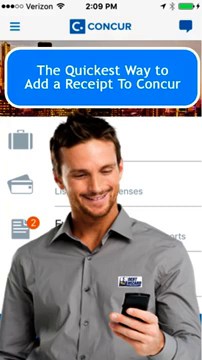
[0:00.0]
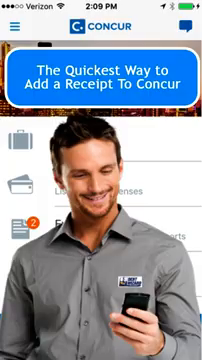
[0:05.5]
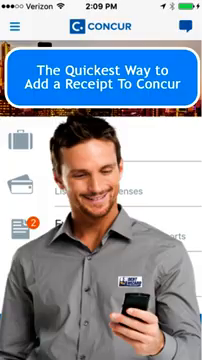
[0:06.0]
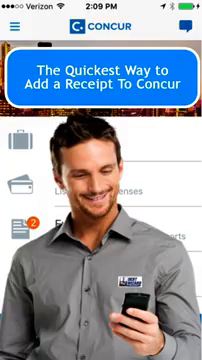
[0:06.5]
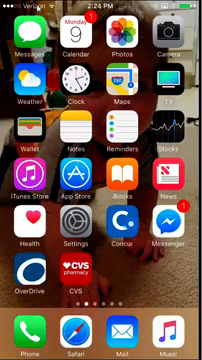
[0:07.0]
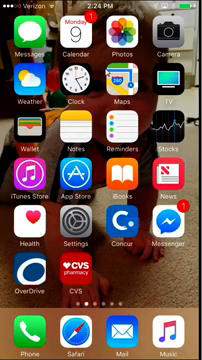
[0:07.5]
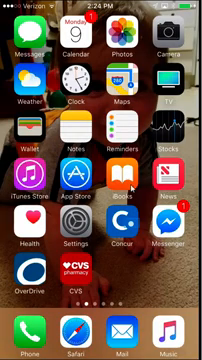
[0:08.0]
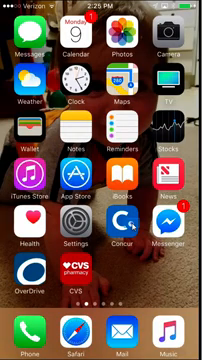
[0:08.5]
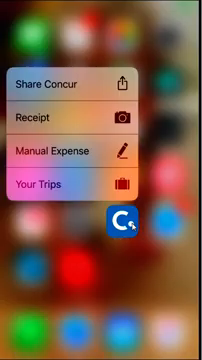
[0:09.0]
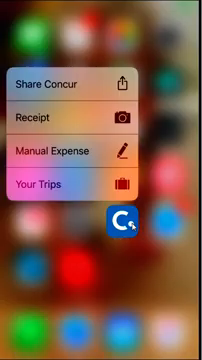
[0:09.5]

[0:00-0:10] A smartphone screen in portrait mode shows the interface of an app called Concur. At the top is a blue text box with white text inside that says "the quickest way to add a receipt to Concur". What appears to be a cutout image of a man looking at a smartphone has been placed on the screen, overlaying the actual app interface. The video then transitions to the home screen of a mobile phone, with the application shortcuts visible. The phone has a personalized background, a photograph of a small child crawling on the floor. A computer cursor is used to navigate the screen, like a phone emulator. The cursor moves down to the fifth row of applications and selects the third one along, a shortcut for the Concur application. Clicking it brings up a menu.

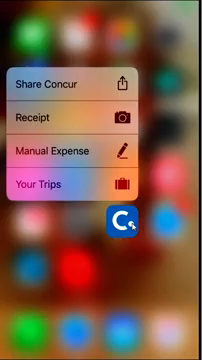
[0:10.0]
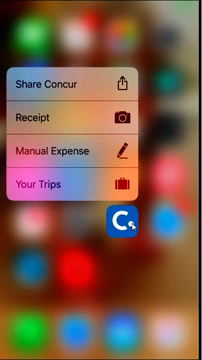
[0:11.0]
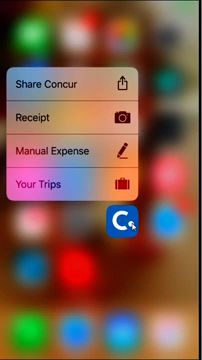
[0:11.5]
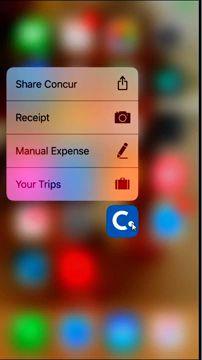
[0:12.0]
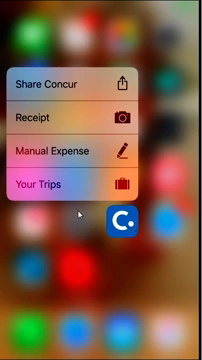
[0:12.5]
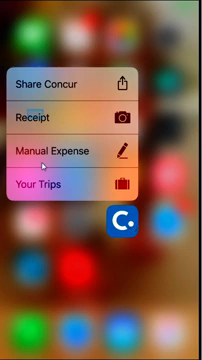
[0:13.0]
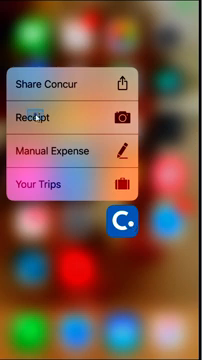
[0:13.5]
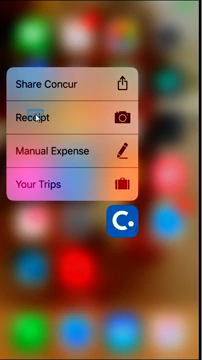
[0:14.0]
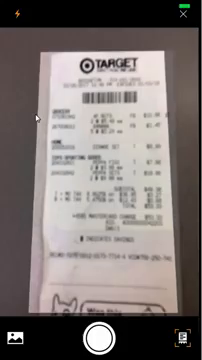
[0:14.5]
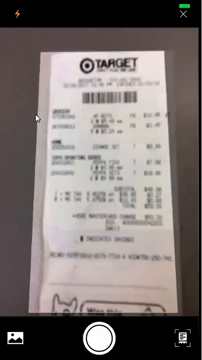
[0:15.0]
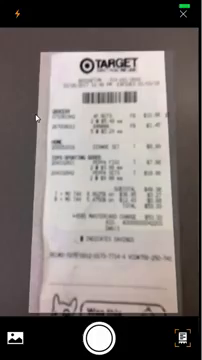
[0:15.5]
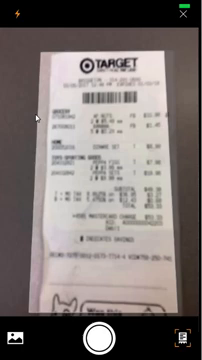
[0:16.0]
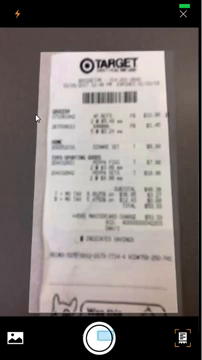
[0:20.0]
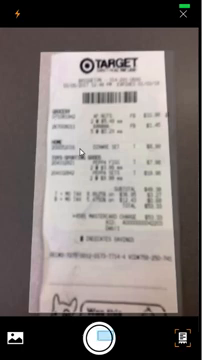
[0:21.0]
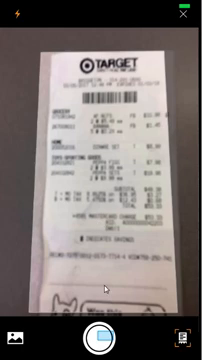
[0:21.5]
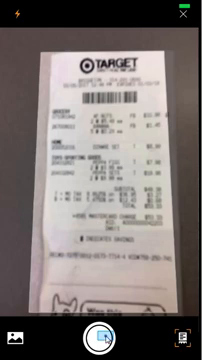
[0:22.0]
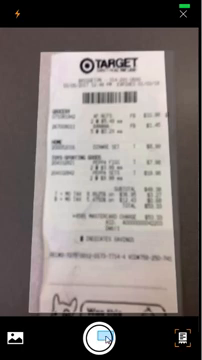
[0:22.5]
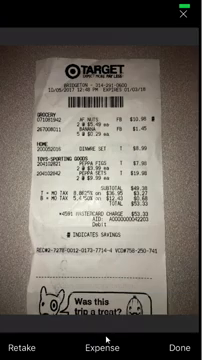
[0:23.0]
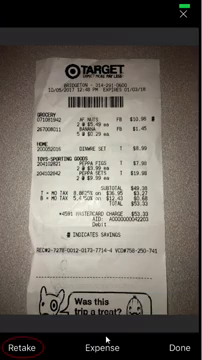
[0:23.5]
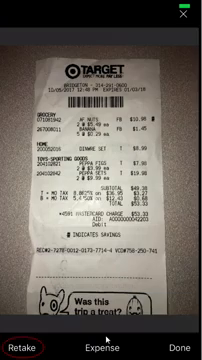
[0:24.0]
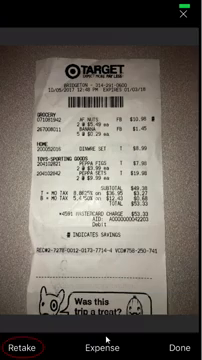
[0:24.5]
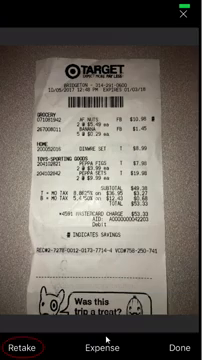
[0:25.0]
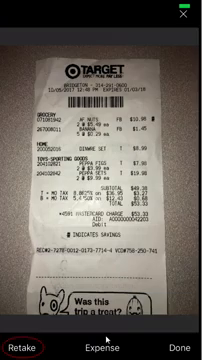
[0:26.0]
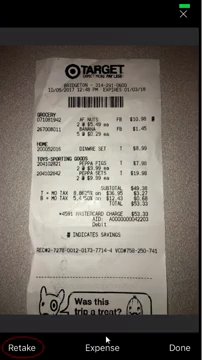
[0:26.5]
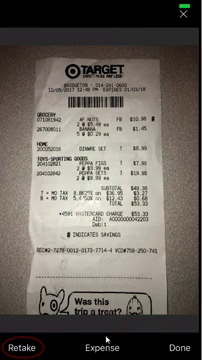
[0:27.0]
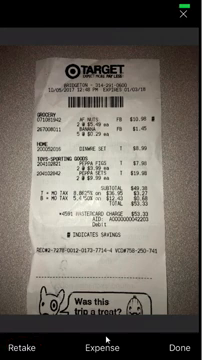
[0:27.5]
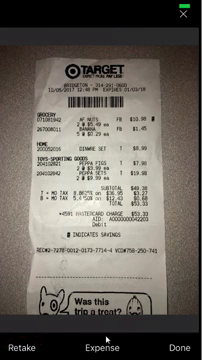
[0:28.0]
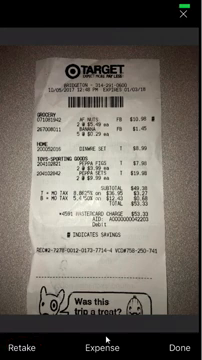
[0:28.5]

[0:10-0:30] A screen recording of a smartphone screen, apparently made with some kind of phone emulator, since the device is operated with a computer cursor rather than the touchscreen. An application shortcut has been selected; it is now the only thing on the screen, with the background and other application shortcuts blurred. A pop-up menu above the shortcut has four options: "share Concur", "receipt", "manual expense" and "your trips". The cursor moves to select the receipt option, which brings up a phone camera app interface showing a receipt for Target, with control buttons at the bottom of the screen for taking a picture. The cursor moves down and selects the button in the bottom centre of the screen, which appears to take a photo of the Target receipt.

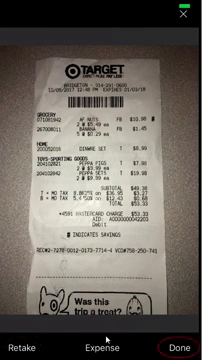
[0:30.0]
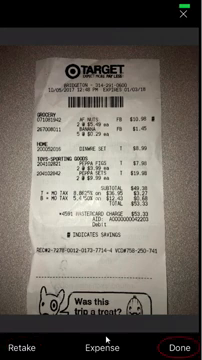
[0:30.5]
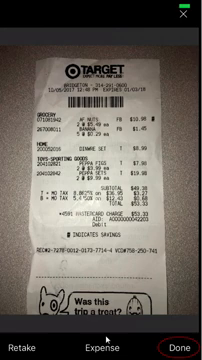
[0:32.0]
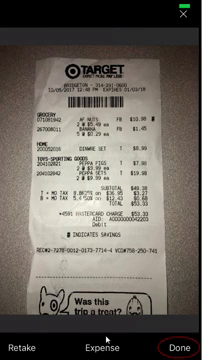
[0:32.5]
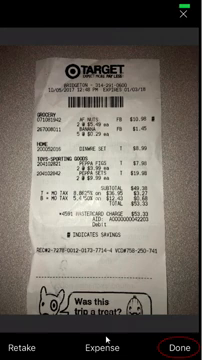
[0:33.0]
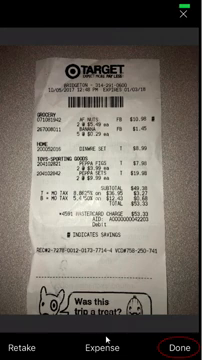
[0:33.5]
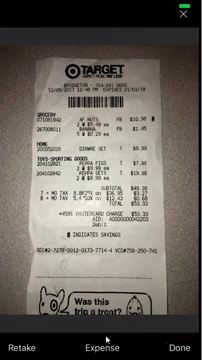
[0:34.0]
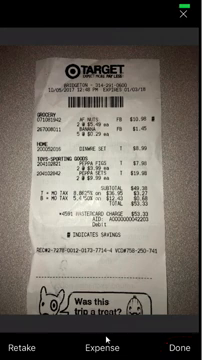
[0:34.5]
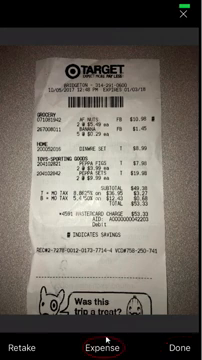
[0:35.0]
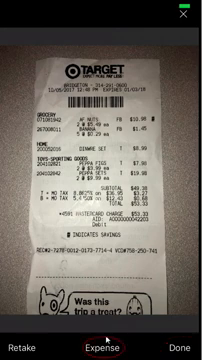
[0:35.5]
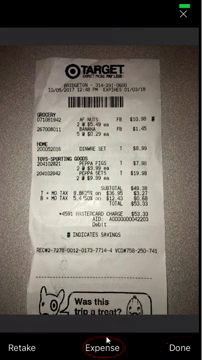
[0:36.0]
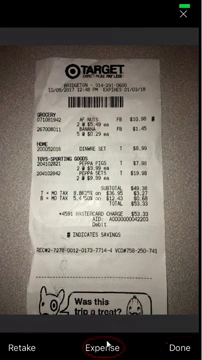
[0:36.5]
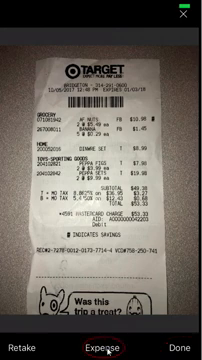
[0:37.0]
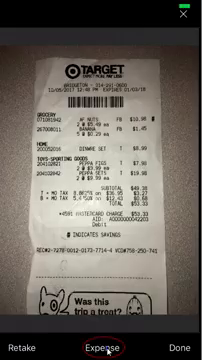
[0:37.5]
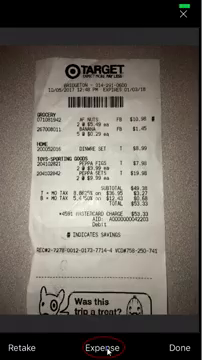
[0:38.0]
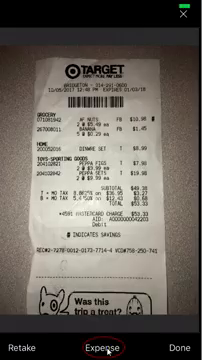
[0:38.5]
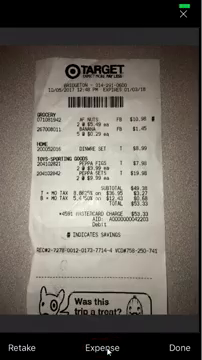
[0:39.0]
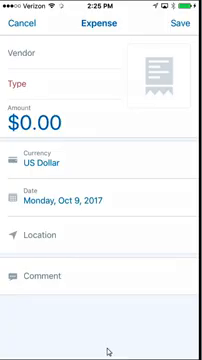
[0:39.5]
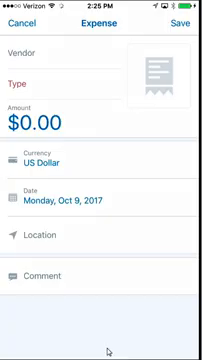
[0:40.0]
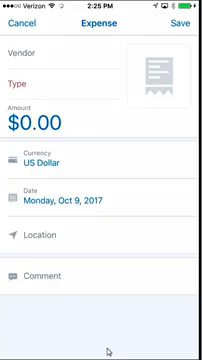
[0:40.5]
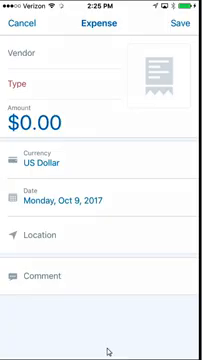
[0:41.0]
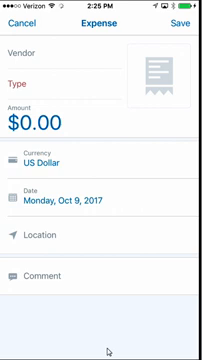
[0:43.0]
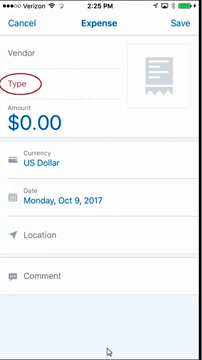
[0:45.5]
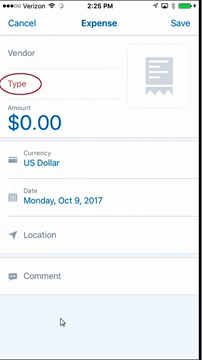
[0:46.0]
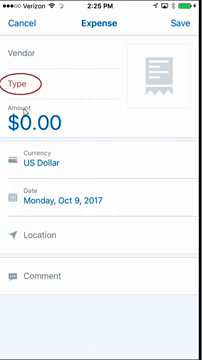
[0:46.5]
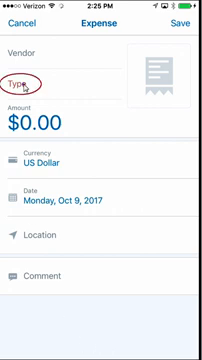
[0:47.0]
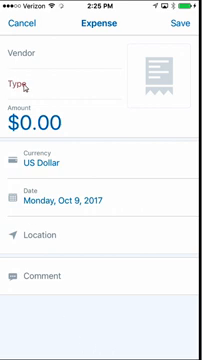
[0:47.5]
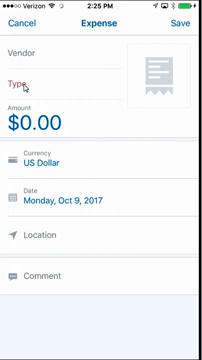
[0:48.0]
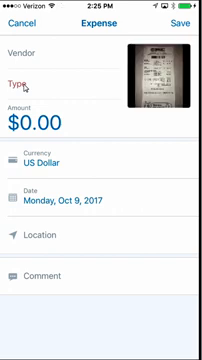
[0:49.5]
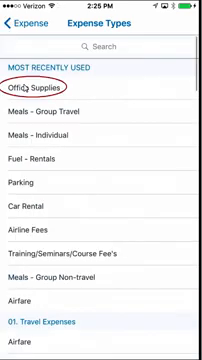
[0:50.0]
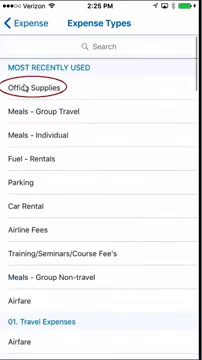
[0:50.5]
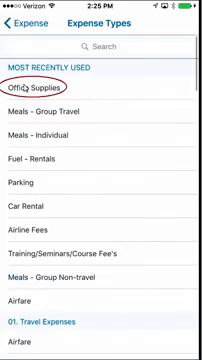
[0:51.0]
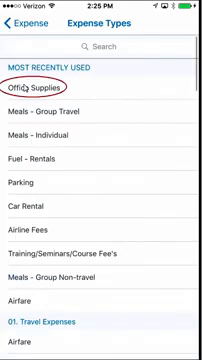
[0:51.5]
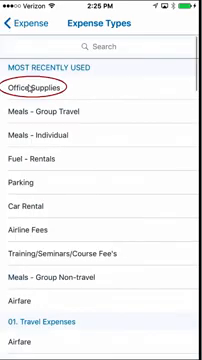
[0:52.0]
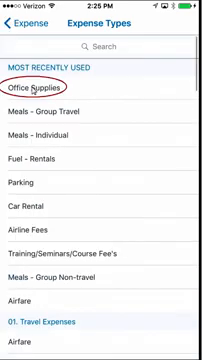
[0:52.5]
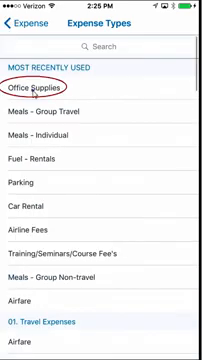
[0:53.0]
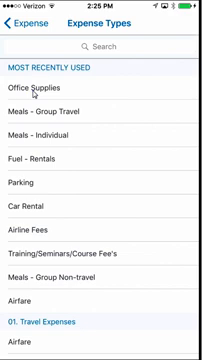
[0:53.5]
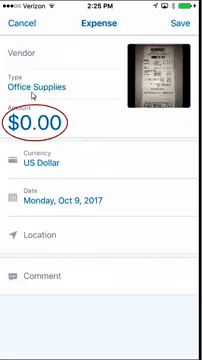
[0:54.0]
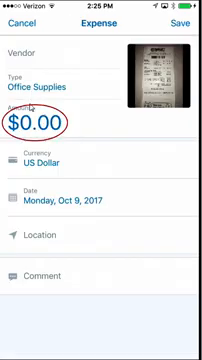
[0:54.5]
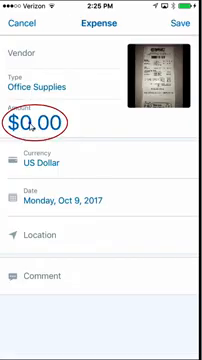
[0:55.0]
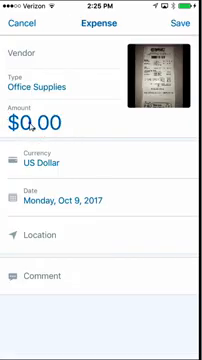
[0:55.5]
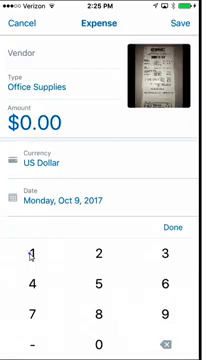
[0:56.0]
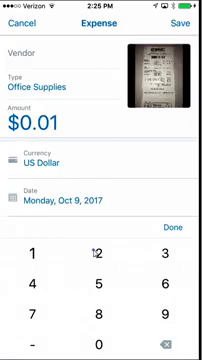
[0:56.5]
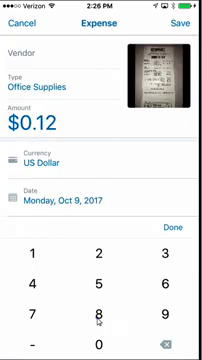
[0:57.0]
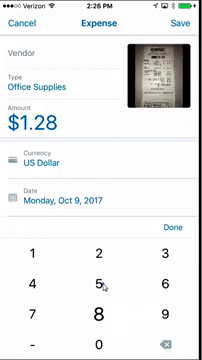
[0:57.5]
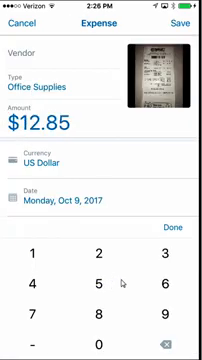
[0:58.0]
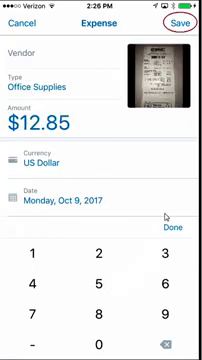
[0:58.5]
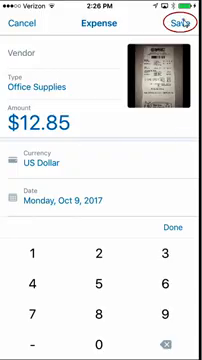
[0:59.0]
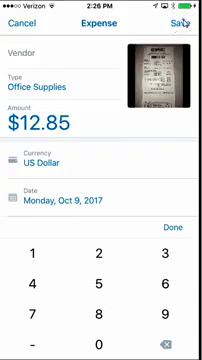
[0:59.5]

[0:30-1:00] A screen recording of a mobile phone interface in portrait mode, operated through some kind of phone emulator with a cursor. The screen shows a camera-style app interface with a photograph of a receipt taken on a table. At the bottom of the receipt are control menu buttons: "Retake", "Expense" and "Done". The centre option, Expense, is highlighted with a red outline, and the user appears to select it. A different screen comes up where the user can input information. The option for "type" has a red outline drawn around it, and the cursor moves and selects it. The screen loads a list of expense types; the top option, "office supplies", is highlighted by a red outline, and the user selects it with the cursor. The screen then returns to the main expenses form.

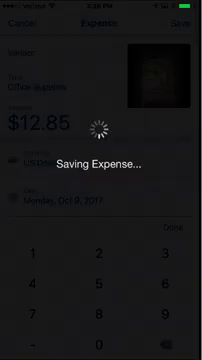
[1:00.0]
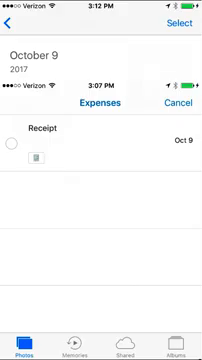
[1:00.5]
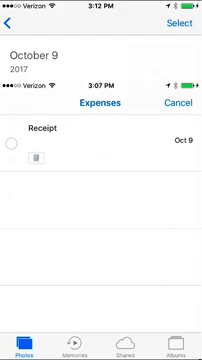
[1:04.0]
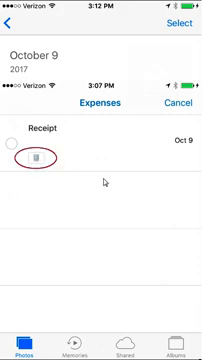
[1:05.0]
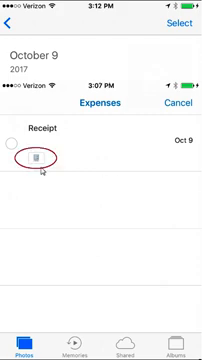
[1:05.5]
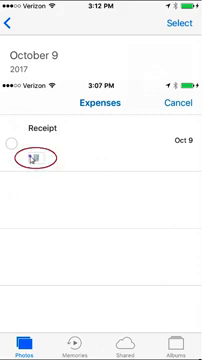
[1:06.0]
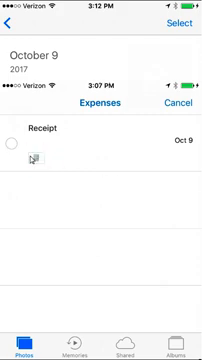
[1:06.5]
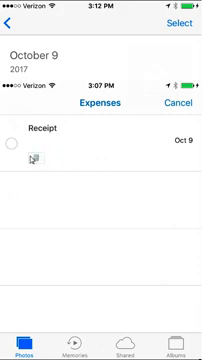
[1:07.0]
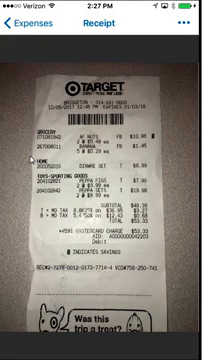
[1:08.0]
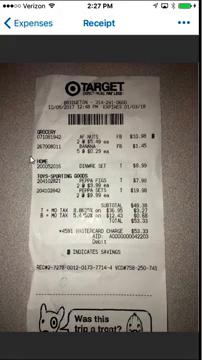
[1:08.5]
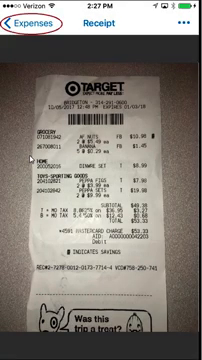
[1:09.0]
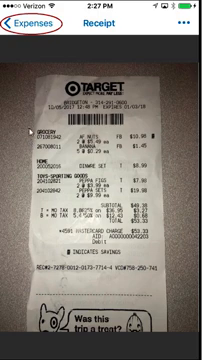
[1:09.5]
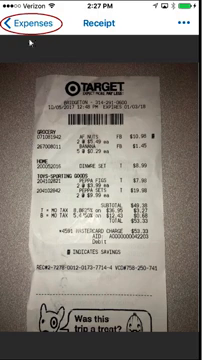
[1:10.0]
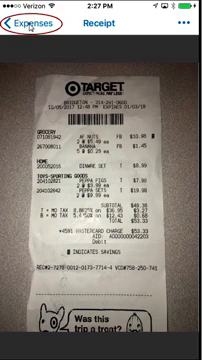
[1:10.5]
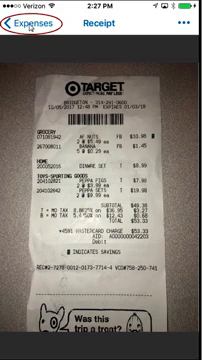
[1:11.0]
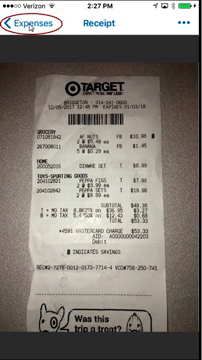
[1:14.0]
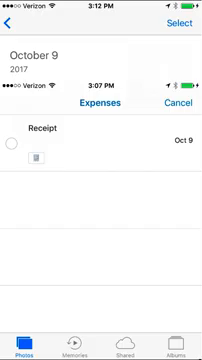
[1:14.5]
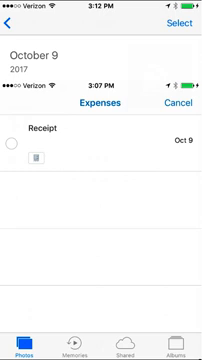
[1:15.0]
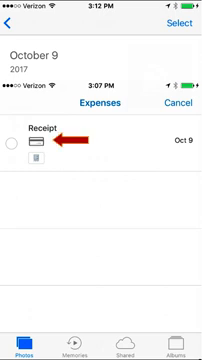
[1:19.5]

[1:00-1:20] A screen recording of a mobile phone shows a user interacting with an application. An expense form is loaded on the screen, with input boxes for expense type, amount, currency and date. The cursor moves to select the save button, which loads an overlaying screen that says "saving expense". The app then loads a different screen called "expenses", where the just-saved expense is at the top of a list, with three empty list boxes below it. The user then selects a small thumbnail of a receipt photograph, which appears to be highlighted by a red outlined circle, and a photograph of a Target receipt appears on the screen. The cursor then moves up to the top left-hand corner and selects a button that says "expenses" with a back arrow, highlighted by a red outline. The screen goes back to the previous page showing the list of expenses, where the single item in the list has a red arrow pointing to it.